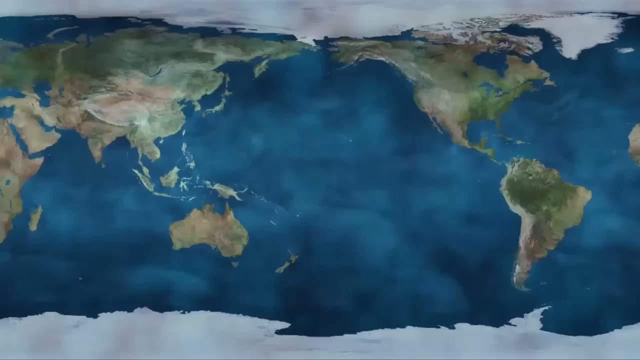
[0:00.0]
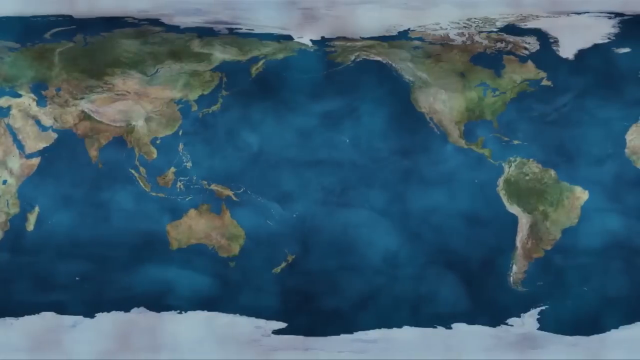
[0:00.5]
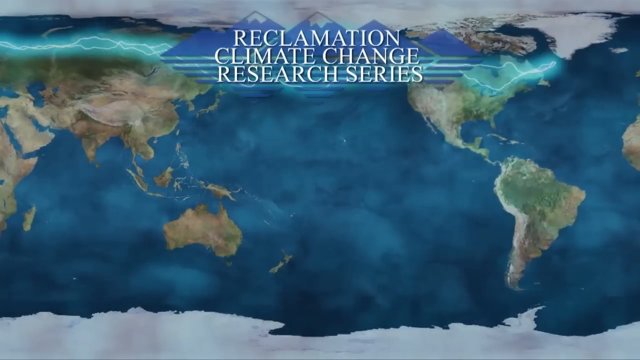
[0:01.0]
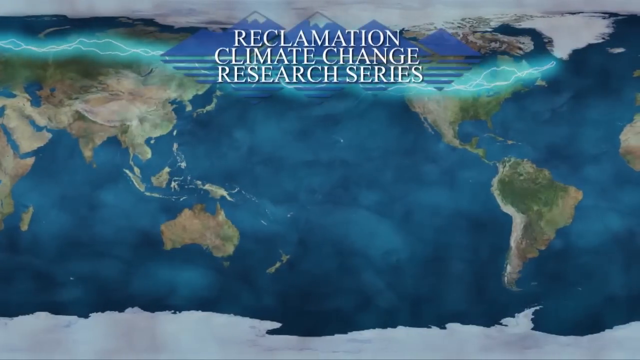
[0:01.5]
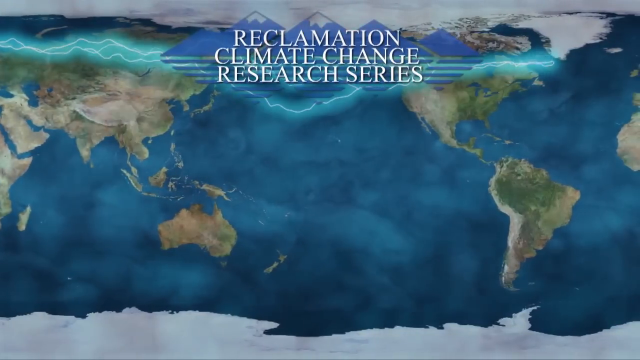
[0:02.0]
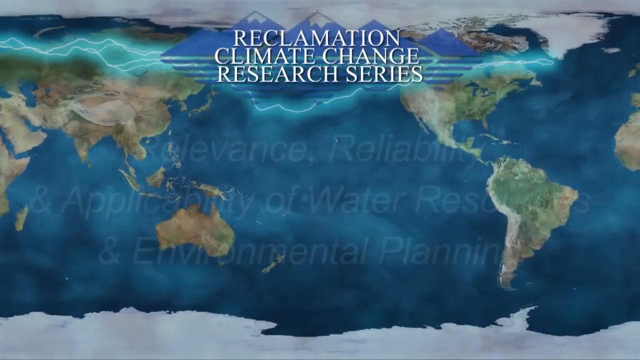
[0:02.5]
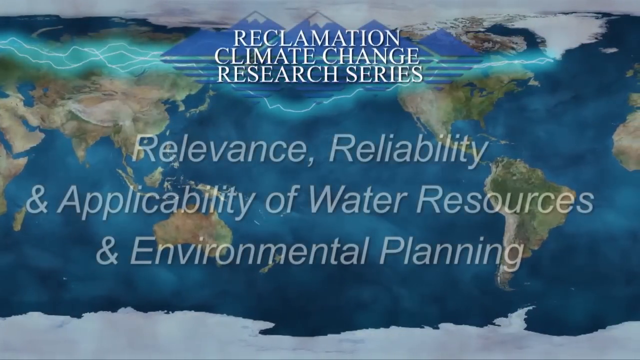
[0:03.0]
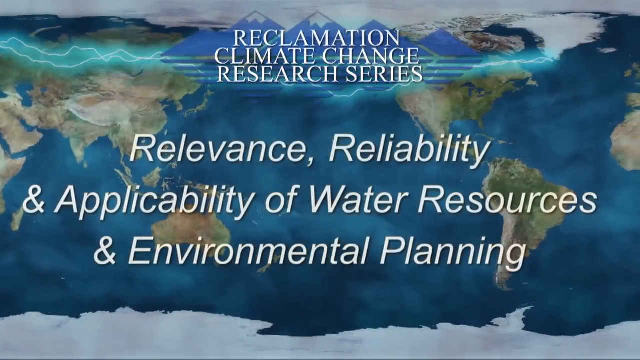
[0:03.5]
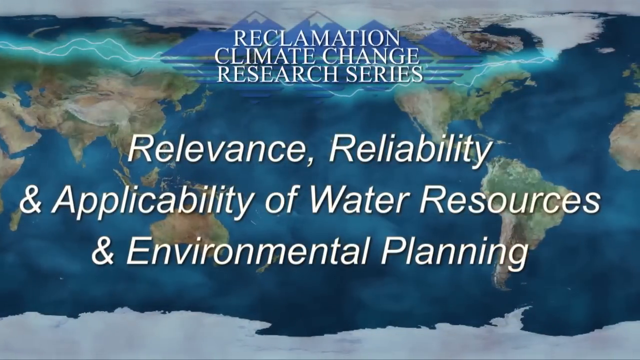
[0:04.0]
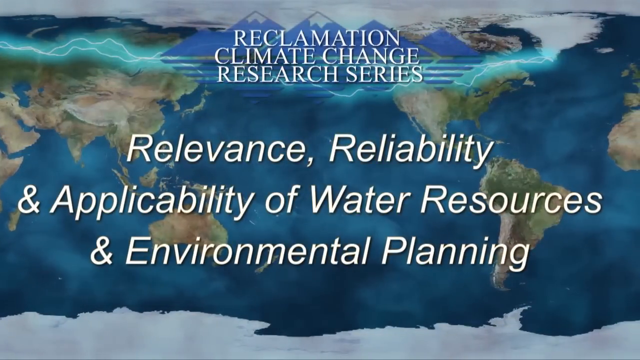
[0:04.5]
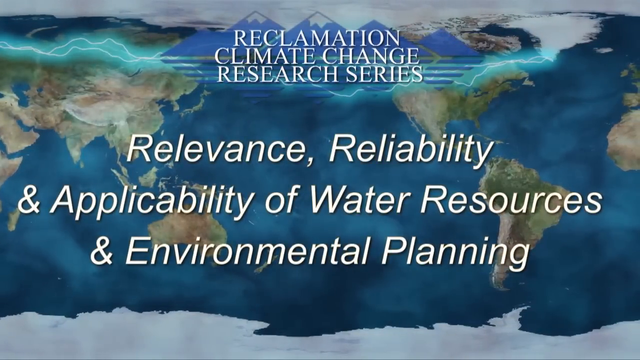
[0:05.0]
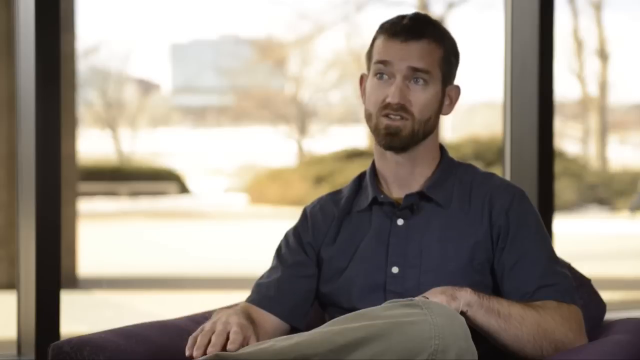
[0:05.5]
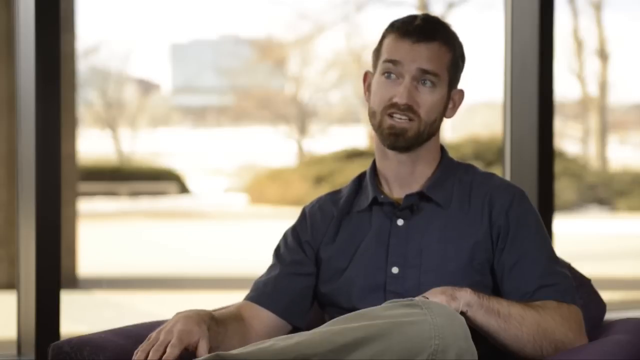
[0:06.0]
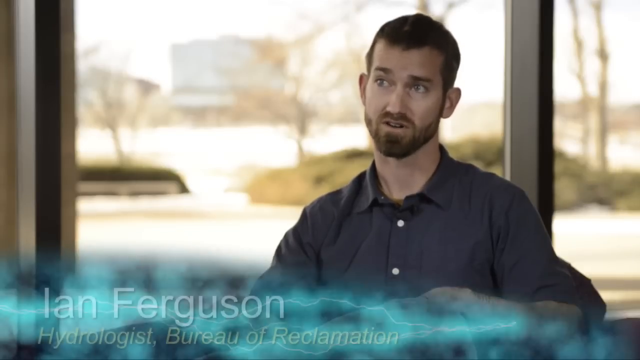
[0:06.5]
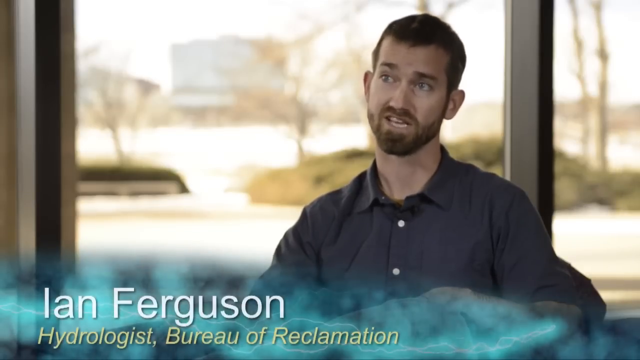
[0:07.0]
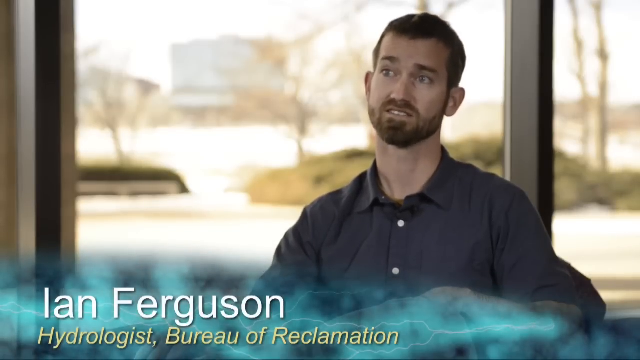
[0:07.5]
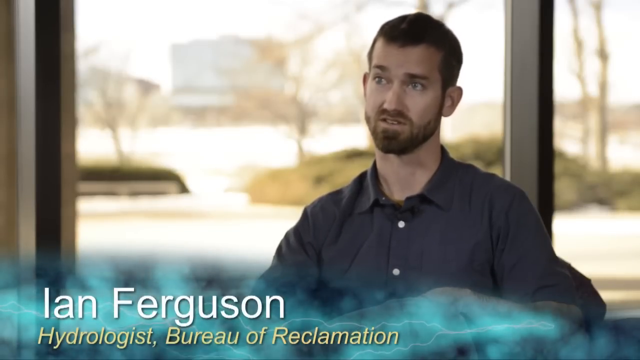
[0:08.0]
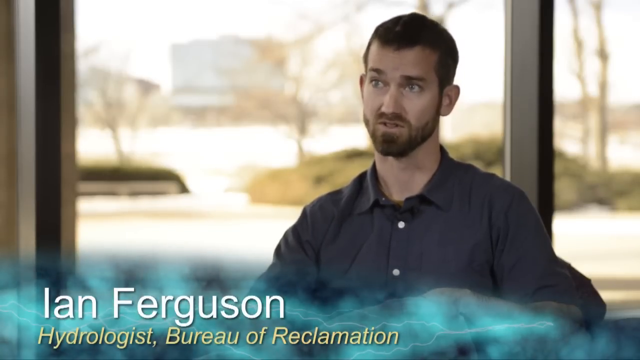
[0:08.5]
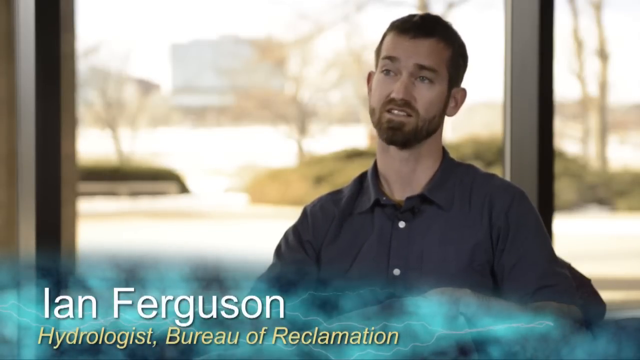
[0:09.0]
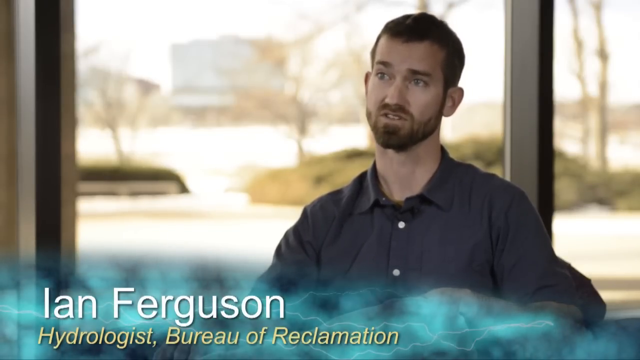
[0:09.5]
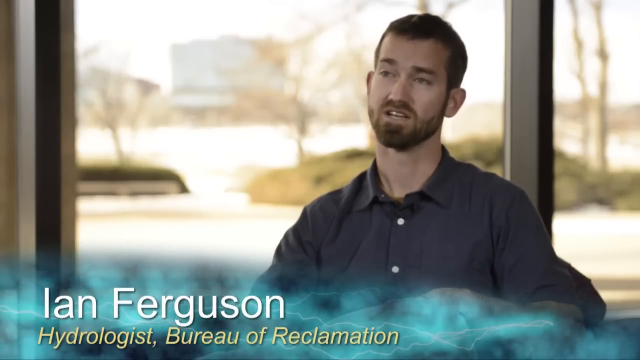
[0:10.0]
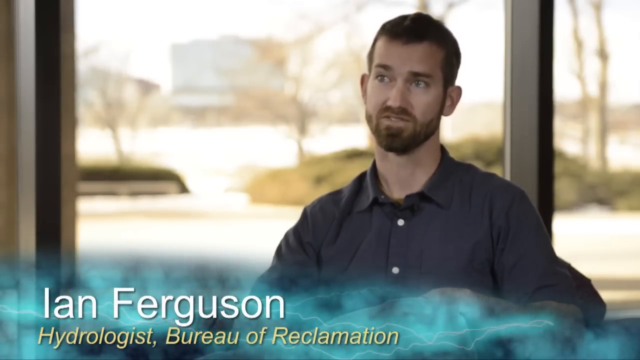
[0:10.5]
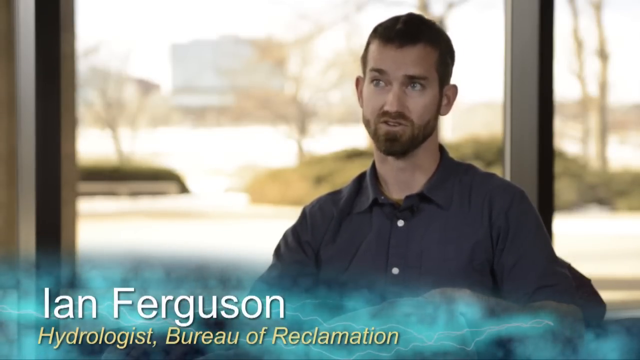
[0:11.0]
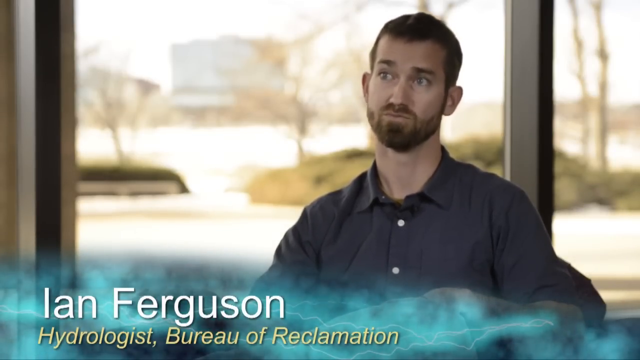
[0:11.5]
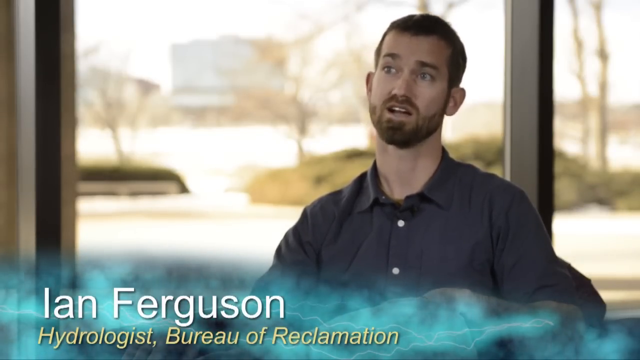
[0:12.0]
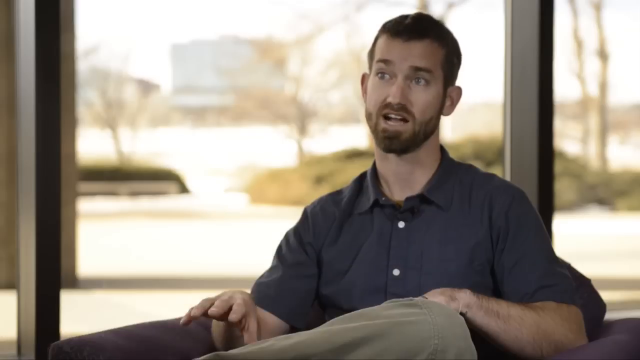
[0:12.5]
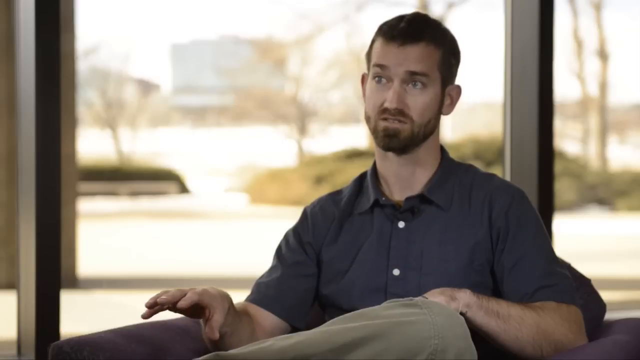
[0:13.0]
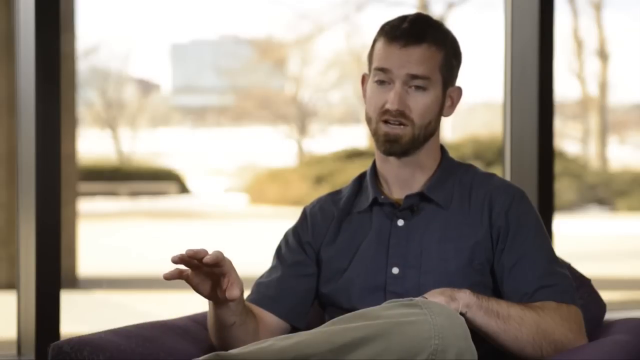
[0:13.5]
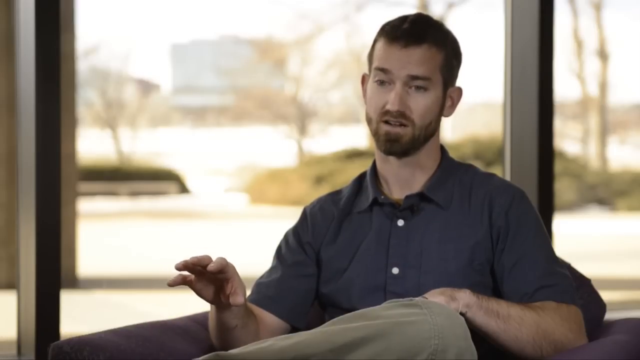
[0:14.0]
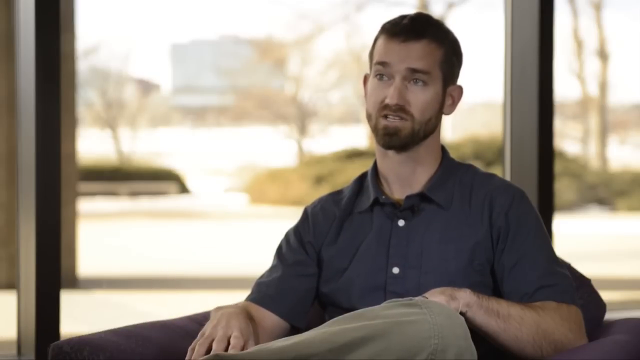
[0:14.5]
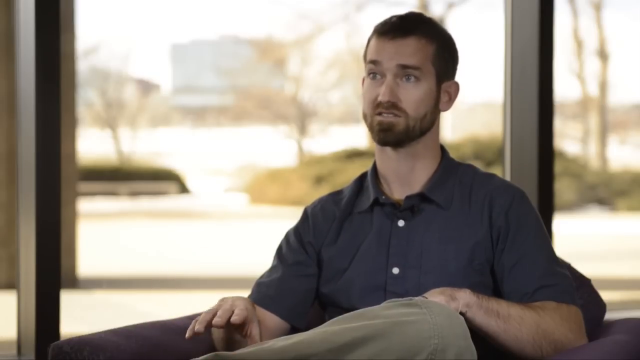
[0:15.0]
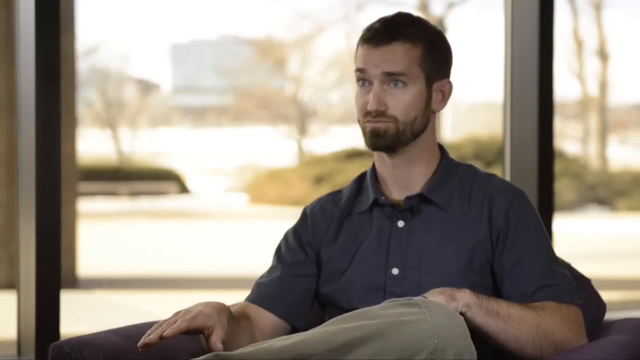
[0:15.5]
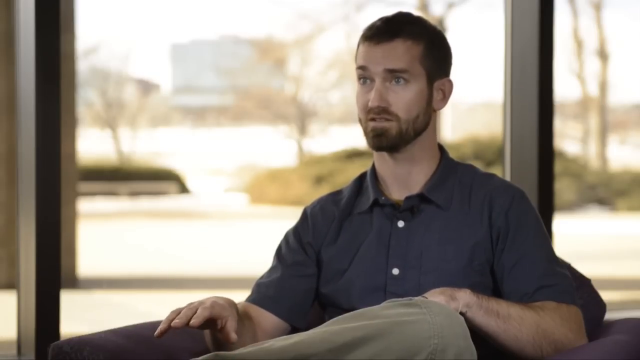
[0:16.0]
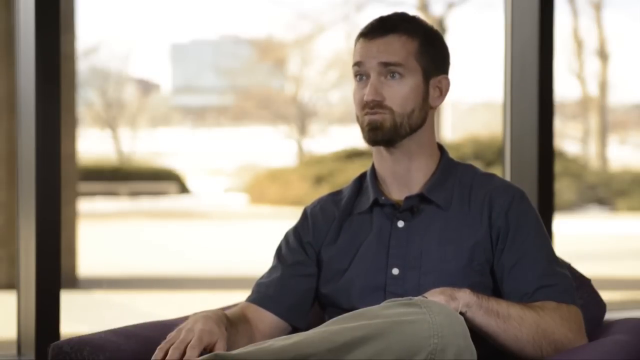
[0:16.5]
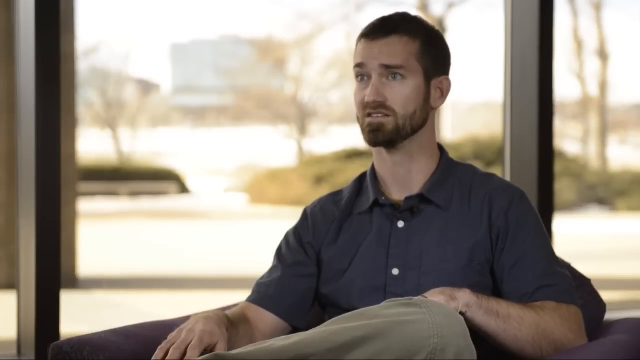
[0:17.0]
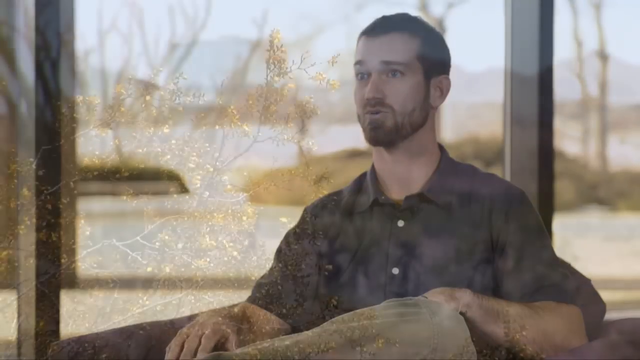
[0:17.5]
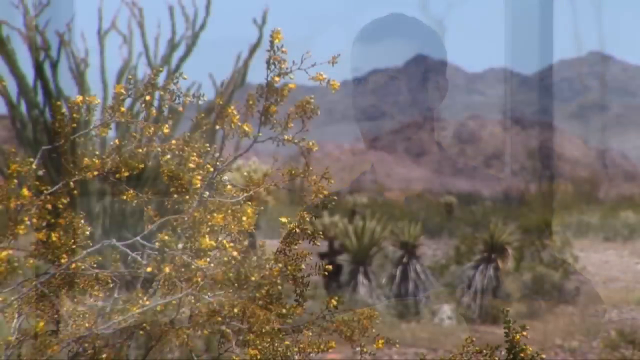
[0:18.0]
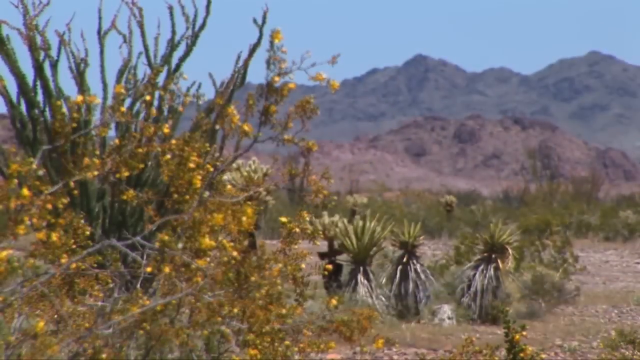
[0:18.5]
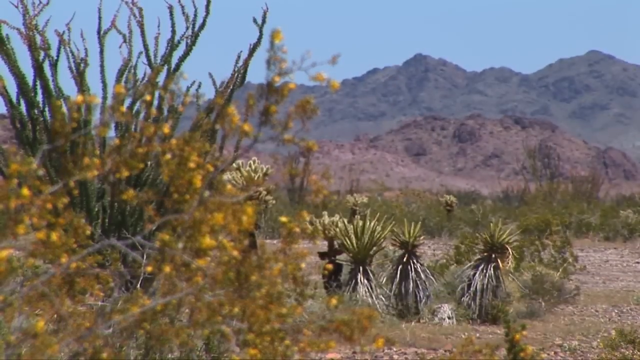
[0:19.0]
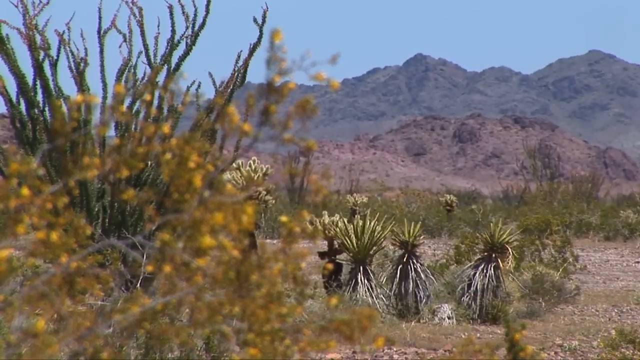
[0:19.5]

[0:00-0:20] A map of the world shows the landmasses and continents in green and the oceans in blue. White writing on the screen says "Reclamation climate change research series relevance reliability and applicability of water resources and environmental planning." A man then talks to somebody off camera, and graphics give his name as Ian Ferguson. He is sitting in front of a large window, through which some trees and some water are visible behind him. He has a beard, a moustache and short dark hair, and he nods his head slightly as he talks. The view changes to a desert-type area with grey mountains in the background, some cactus plants in the foreground, some flowers and some yellow plants. There are stones and some sand on the ground, and it looks like a desert climate.